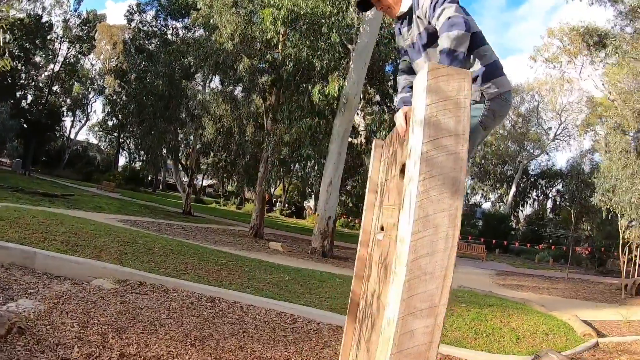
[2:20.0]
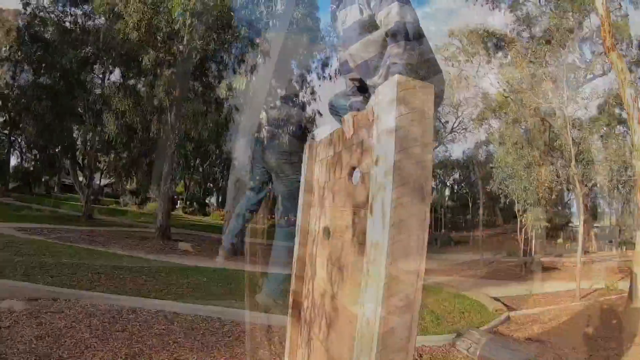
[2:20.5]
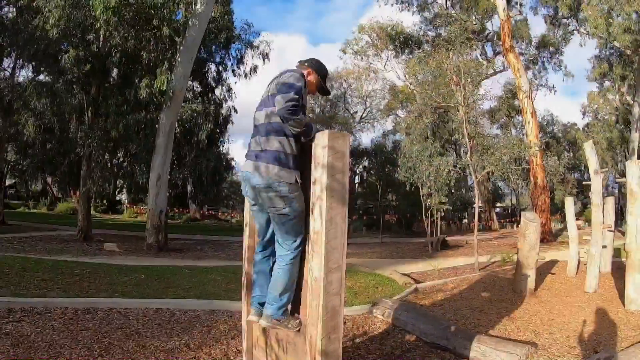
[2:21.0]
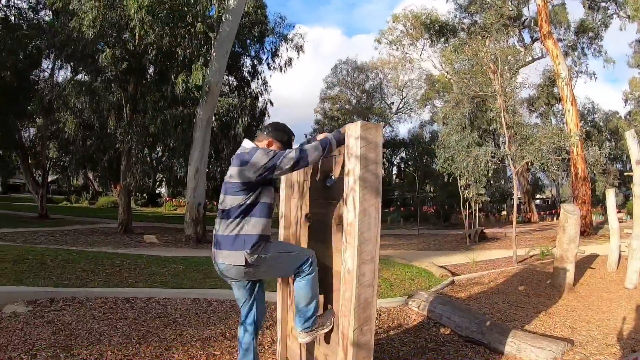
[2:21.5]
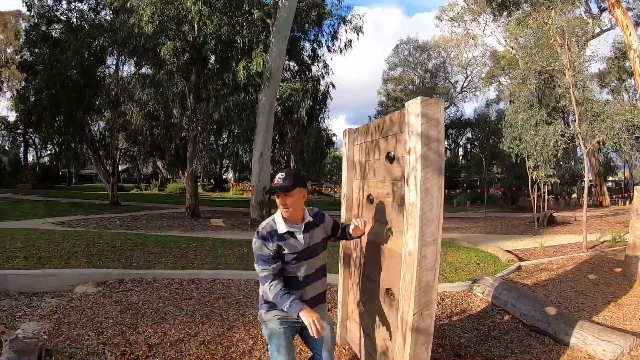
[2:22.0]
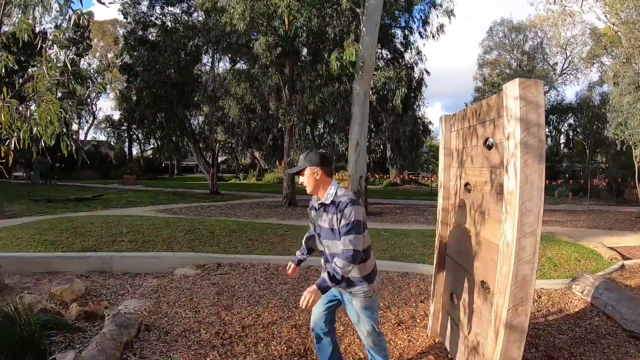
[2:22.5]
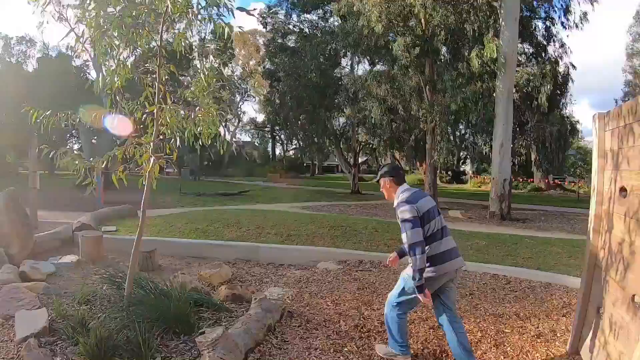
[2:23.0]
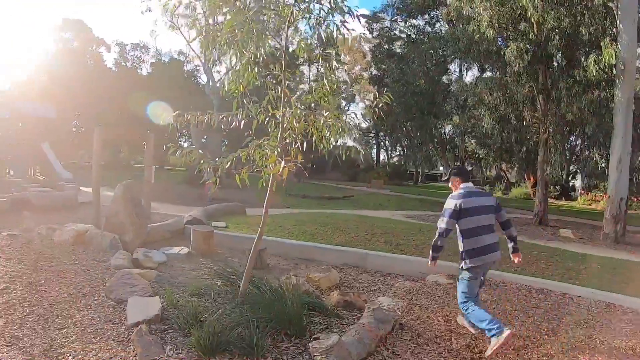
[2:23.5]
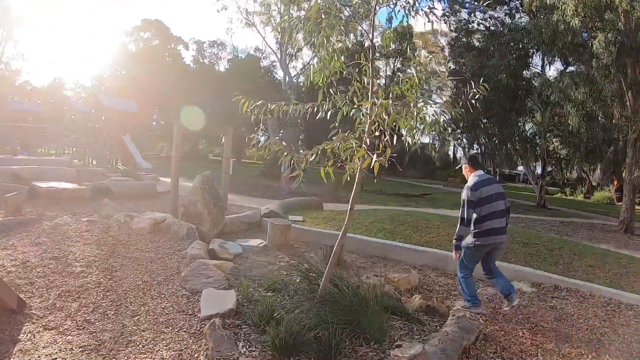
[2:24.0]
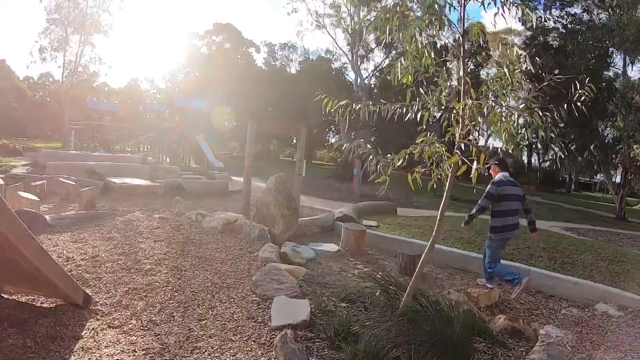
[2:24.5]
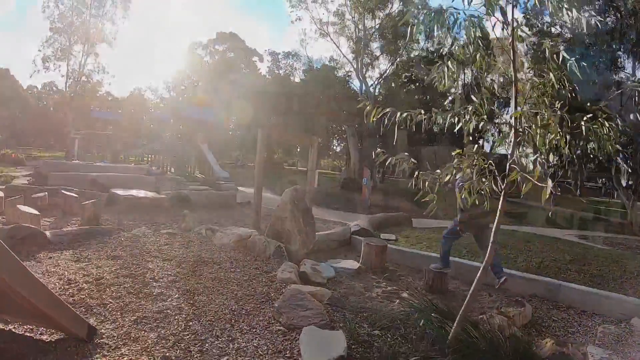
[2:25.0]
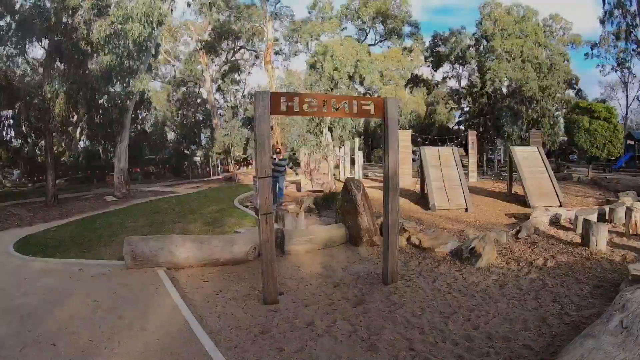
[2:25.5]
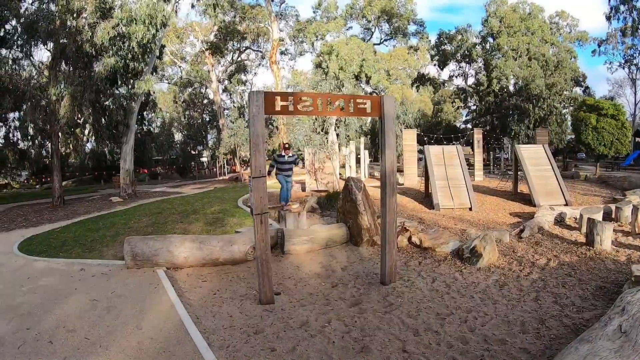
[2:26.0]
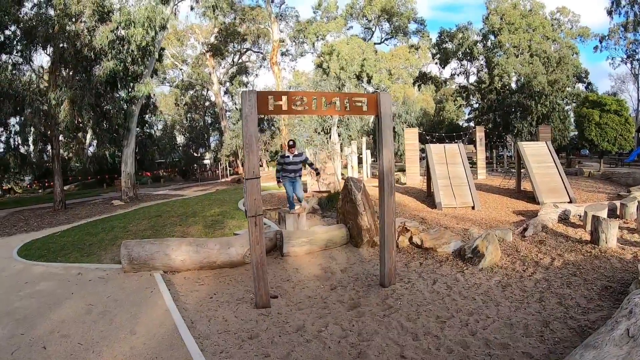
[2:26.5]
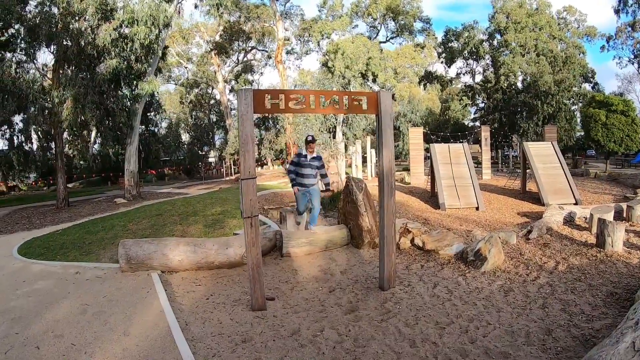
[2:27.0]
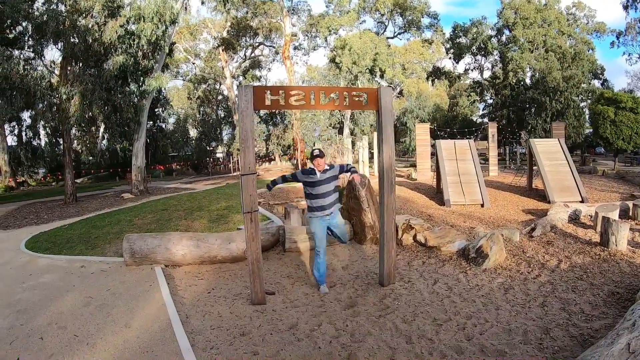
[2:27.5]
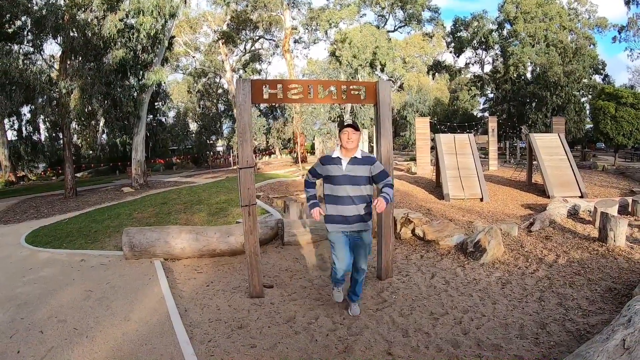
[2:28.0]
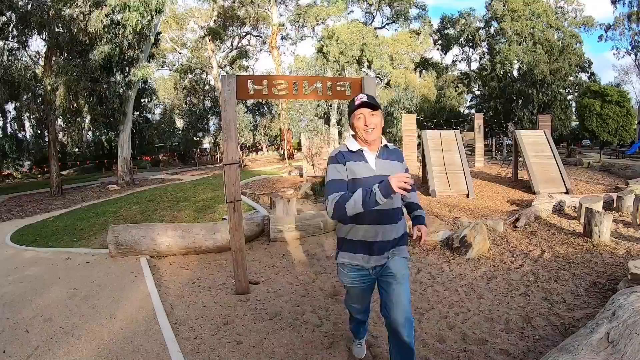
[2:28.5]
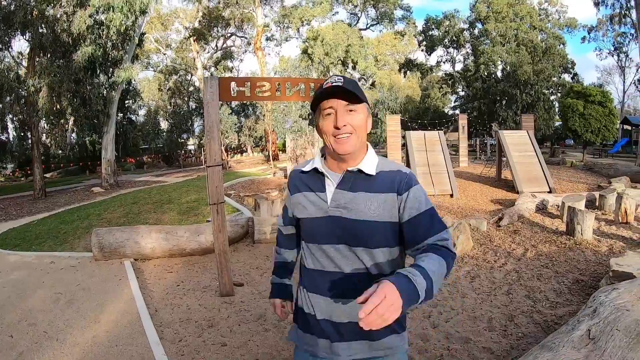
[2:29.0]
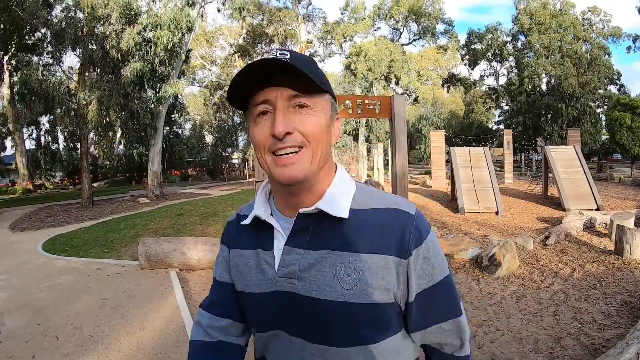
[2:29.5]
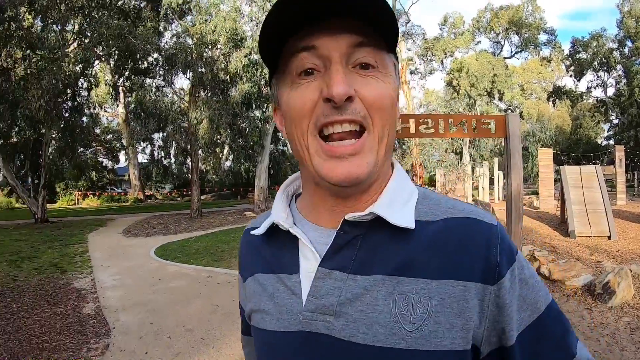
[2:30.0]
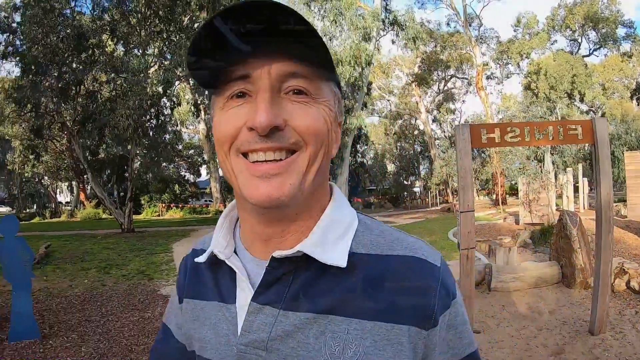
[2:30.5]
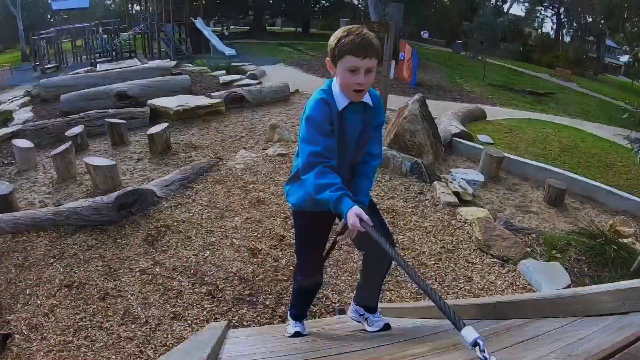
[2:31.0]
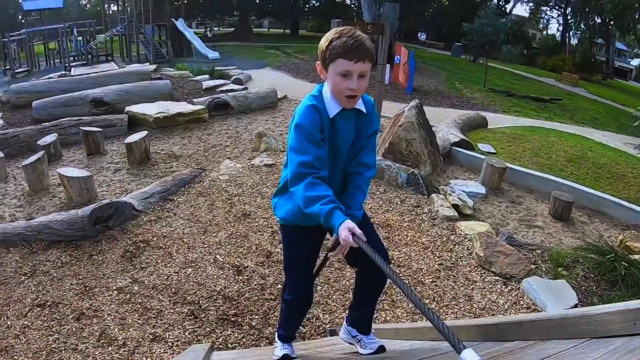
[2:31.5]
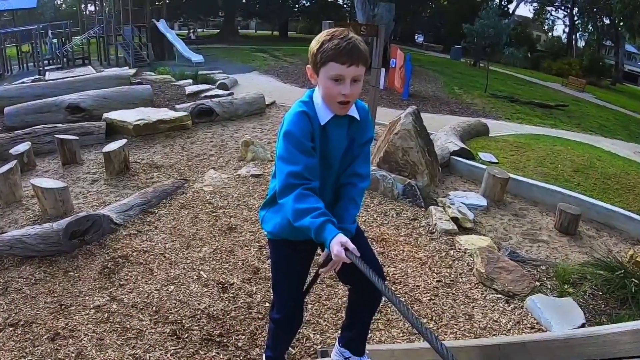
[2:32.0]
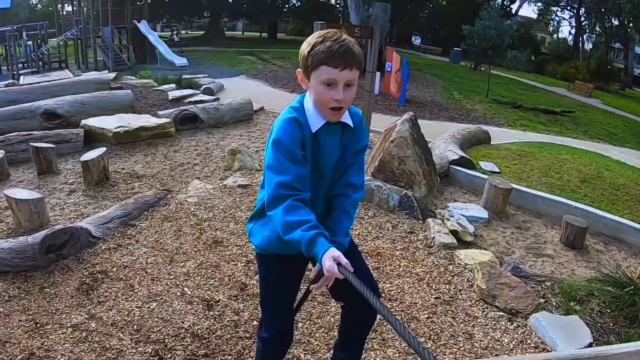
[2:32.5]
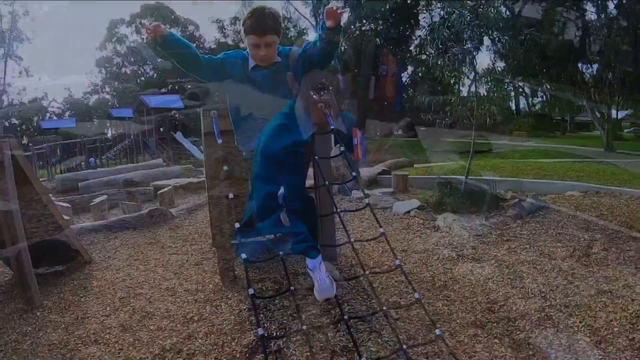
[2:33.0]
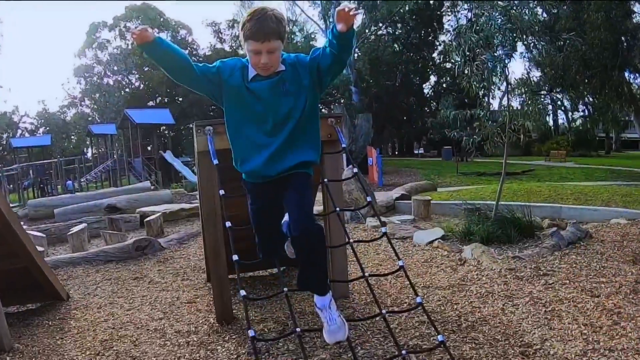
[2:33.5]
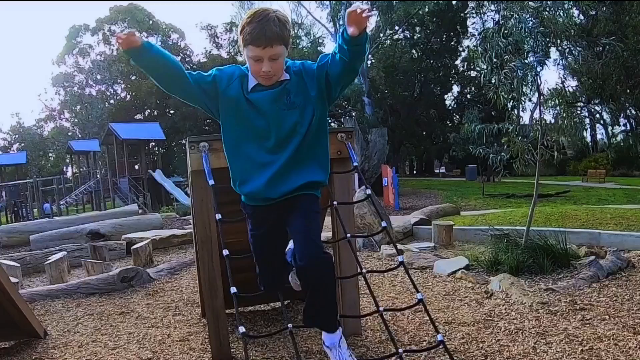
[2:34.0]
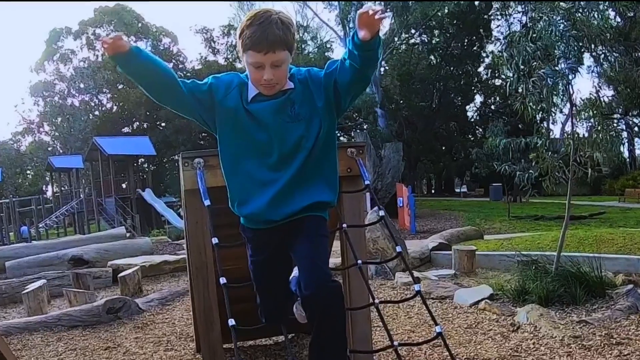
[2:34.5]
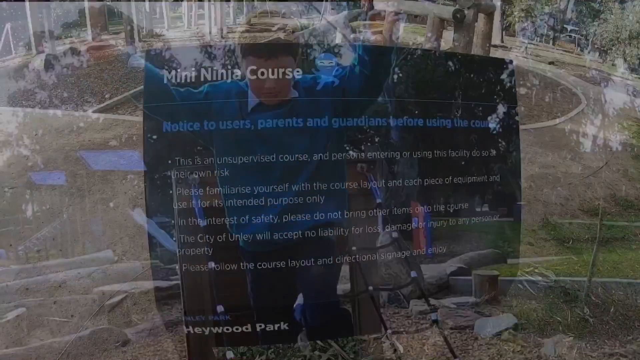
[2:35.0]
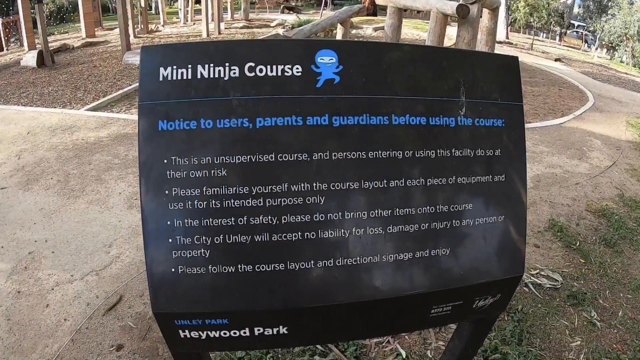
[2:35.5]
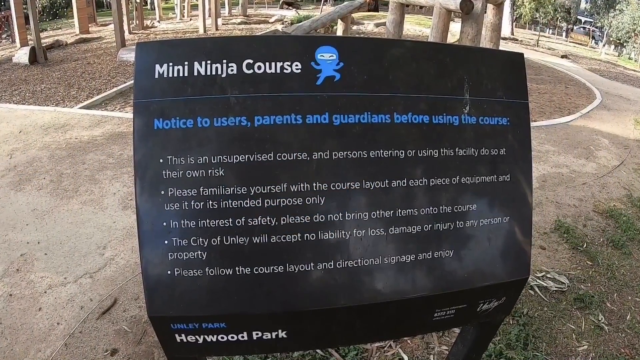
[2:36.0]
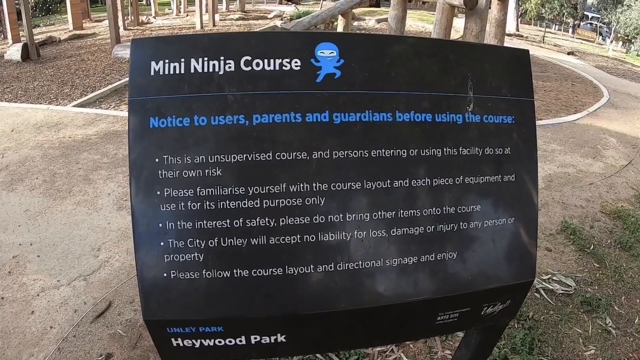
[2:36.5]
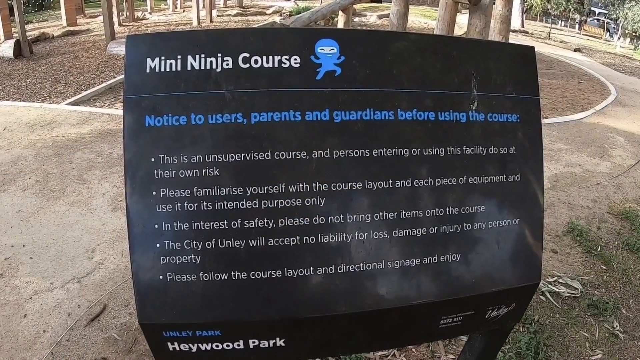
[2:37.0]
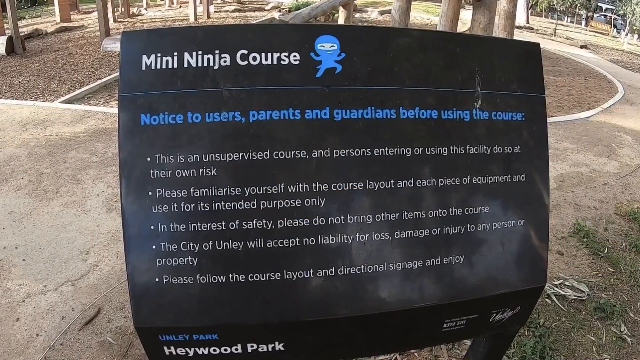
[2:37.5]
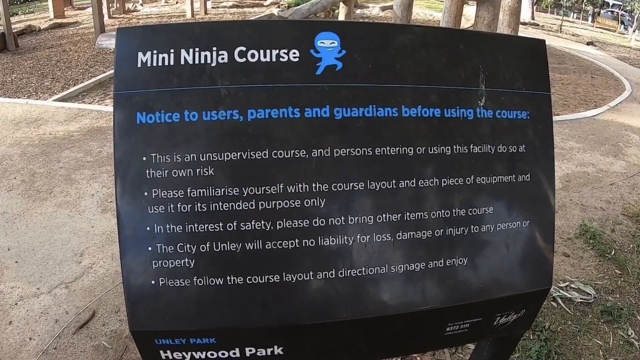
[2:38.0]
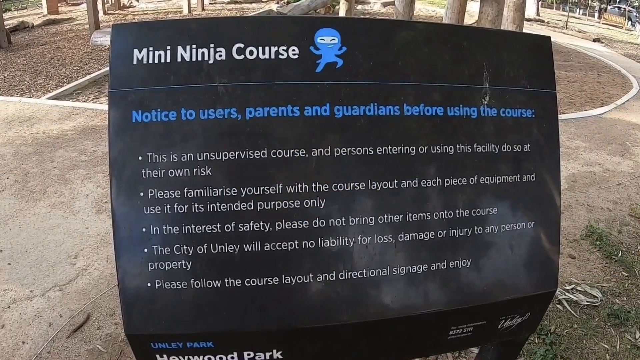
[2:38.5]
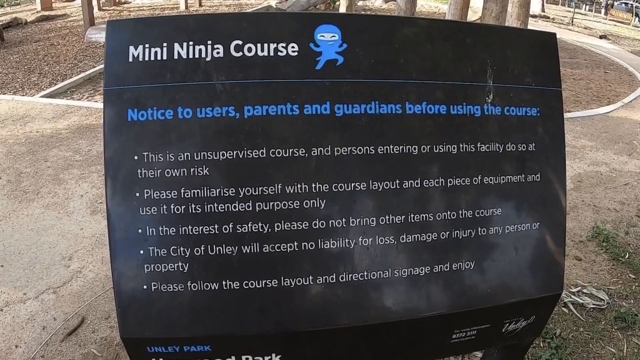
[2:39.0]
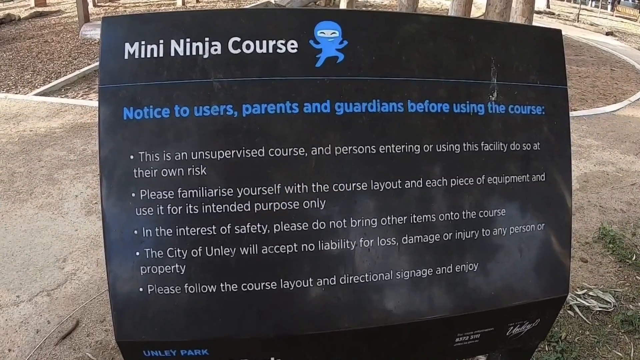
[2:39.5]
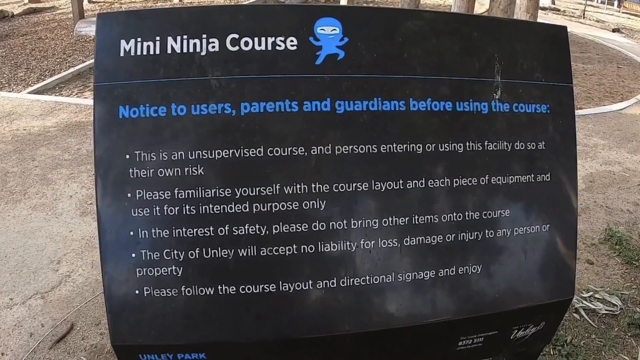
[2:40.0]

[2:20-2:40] The man in the striped polo shirt and baseball cap climbs over a wooden obstacle made of two posts with a wood plank between them; the plank has holes carved out for hands and feet so it can be climbed over like a gate, though it is taller than a gate usually is. The man gets over and runs toward the next attraction, then crosses the finish line, with "finish" seen backwards on the gate. A slow montage of stills follows, showing the man and the boy doing several of the obstacles, both smiling. The man crosses the bridge to reach the finish line, smiling at the camera, and the boy goes up the ramp and down the rope ladder. There is another shot of the mini ninja course. The attractions look big enough for adults and not too challenging for children, and both the man and the boy finish the course.